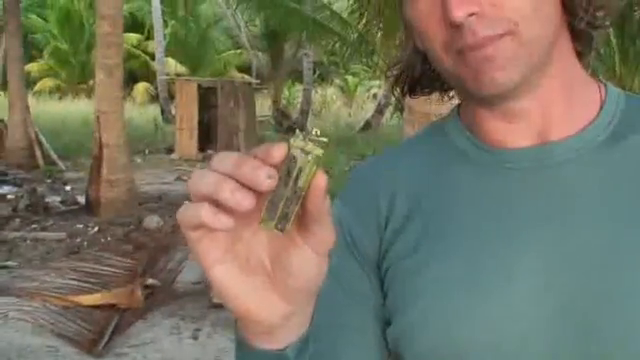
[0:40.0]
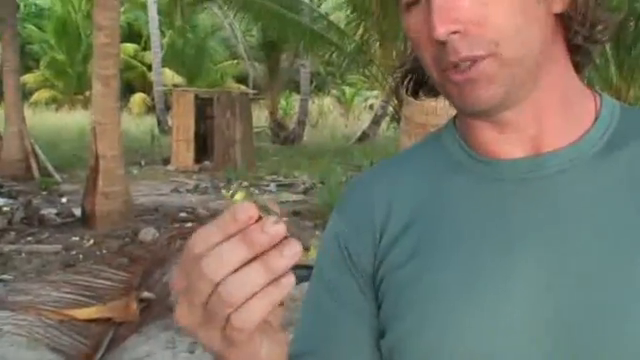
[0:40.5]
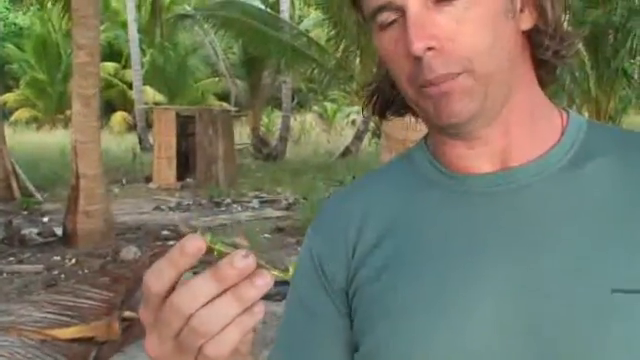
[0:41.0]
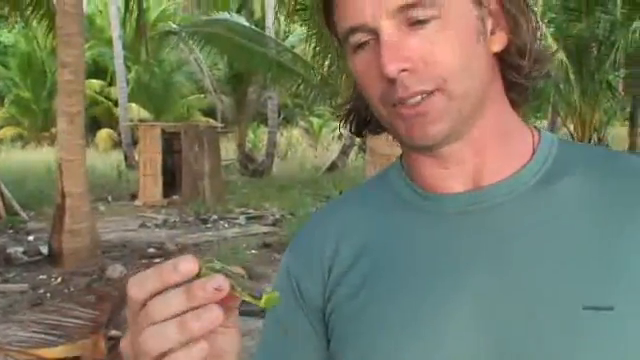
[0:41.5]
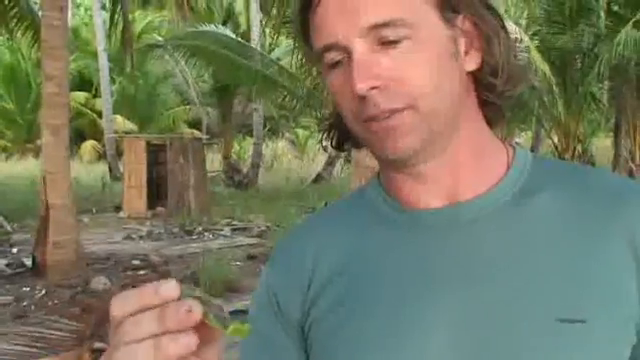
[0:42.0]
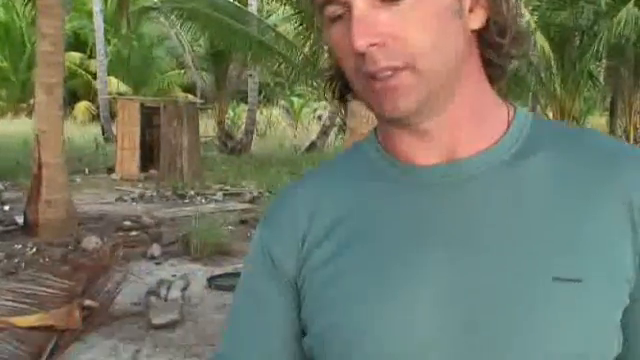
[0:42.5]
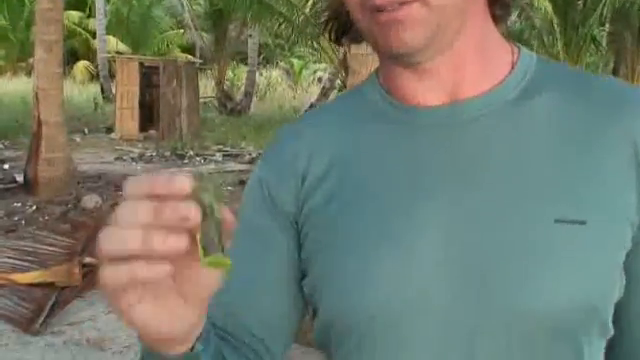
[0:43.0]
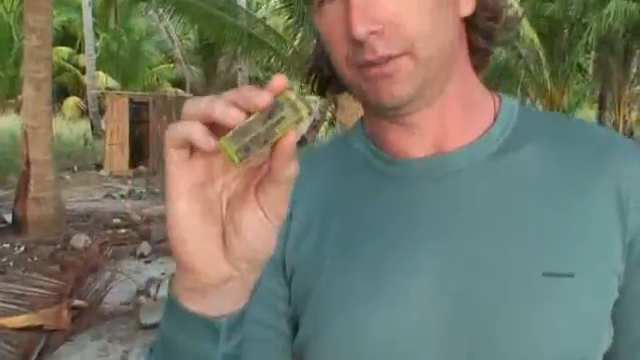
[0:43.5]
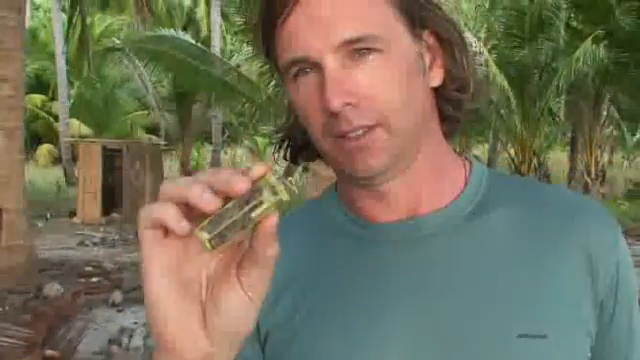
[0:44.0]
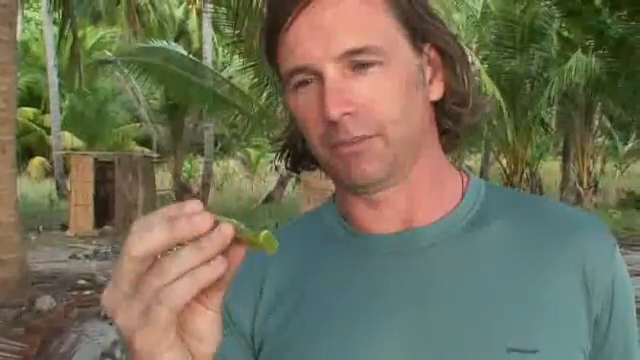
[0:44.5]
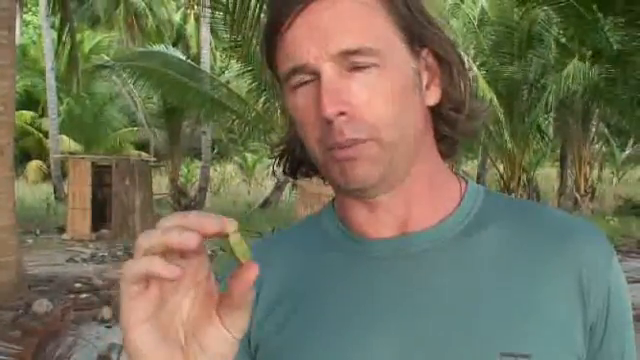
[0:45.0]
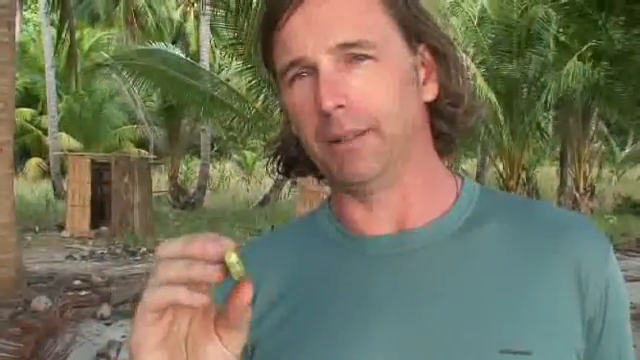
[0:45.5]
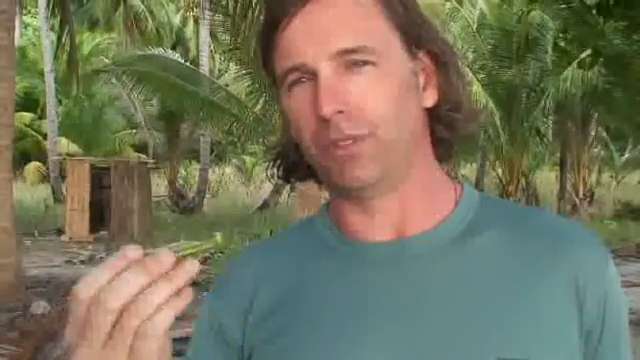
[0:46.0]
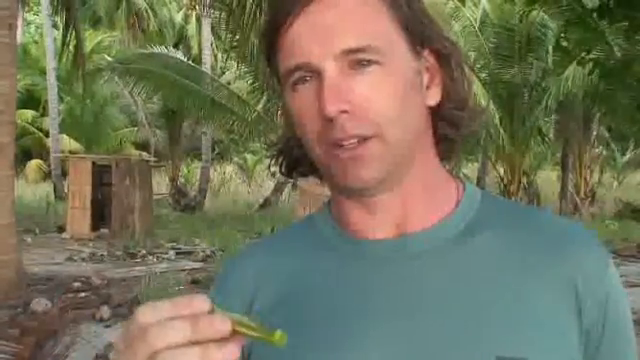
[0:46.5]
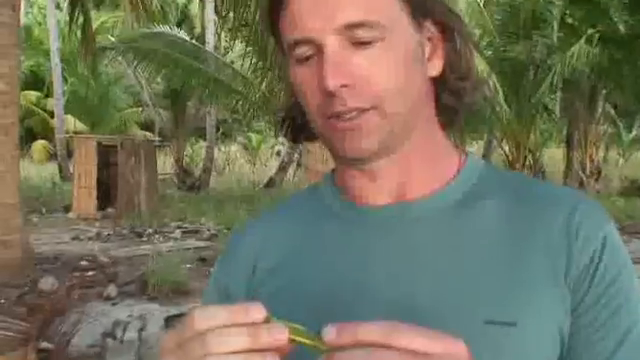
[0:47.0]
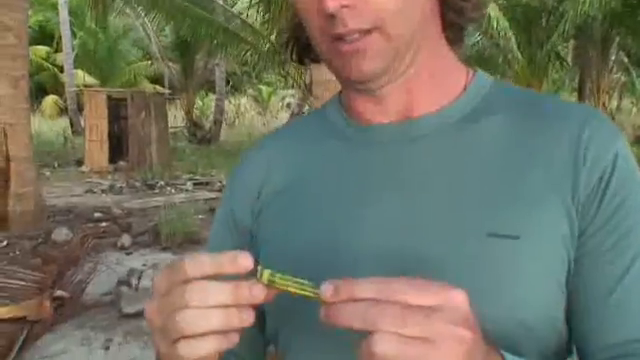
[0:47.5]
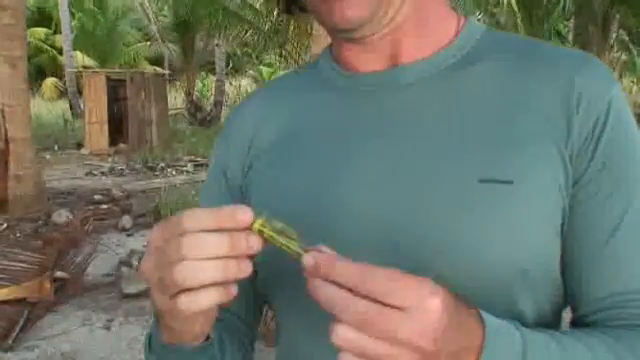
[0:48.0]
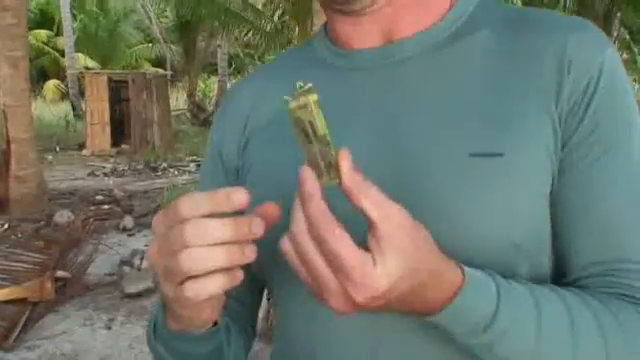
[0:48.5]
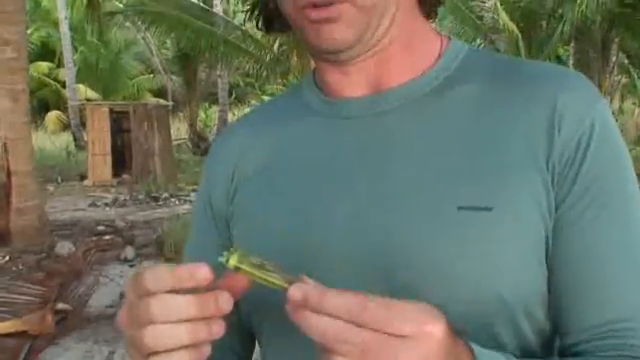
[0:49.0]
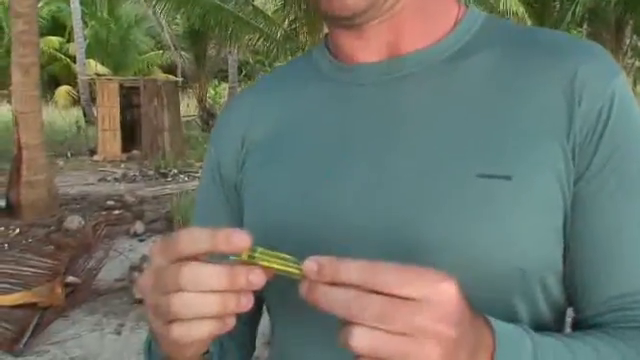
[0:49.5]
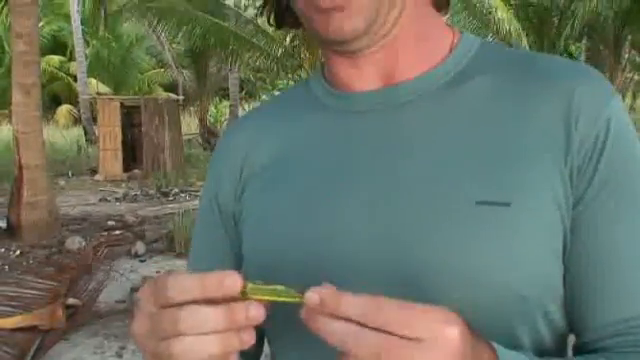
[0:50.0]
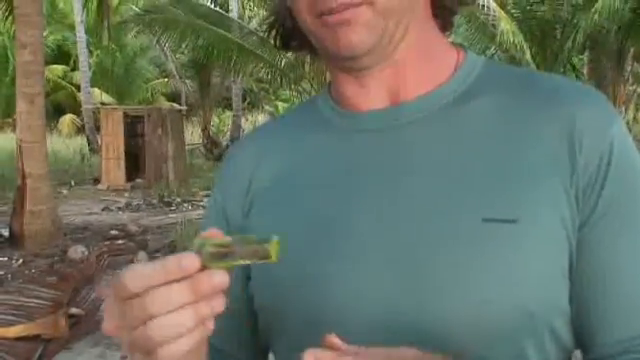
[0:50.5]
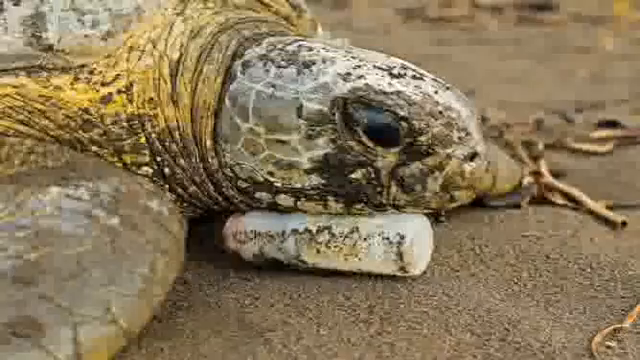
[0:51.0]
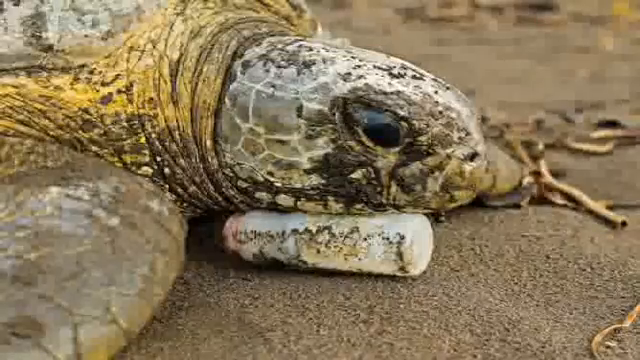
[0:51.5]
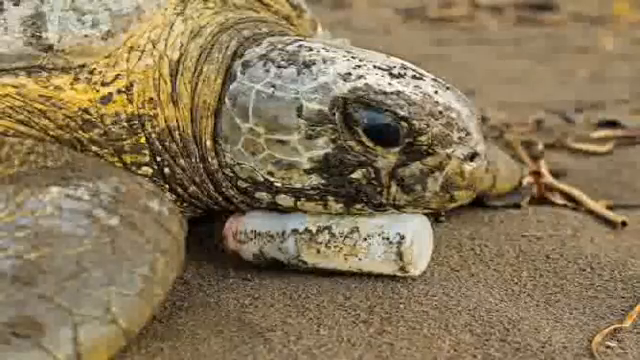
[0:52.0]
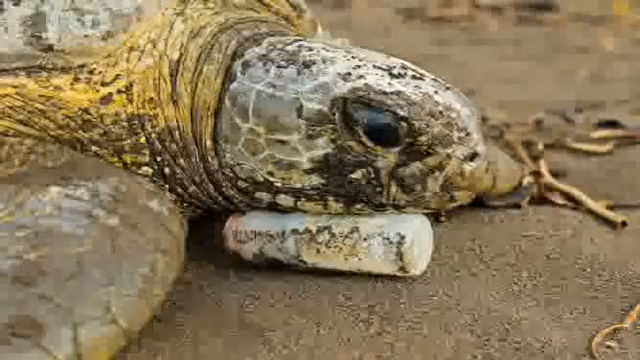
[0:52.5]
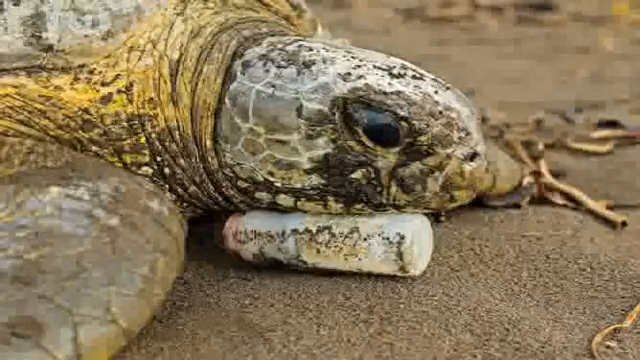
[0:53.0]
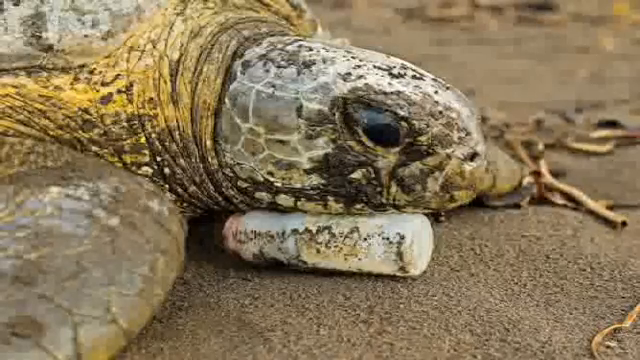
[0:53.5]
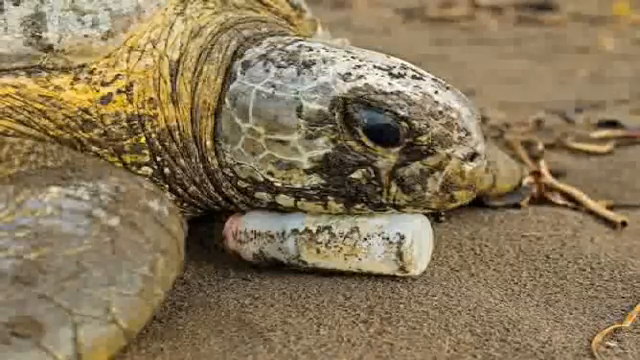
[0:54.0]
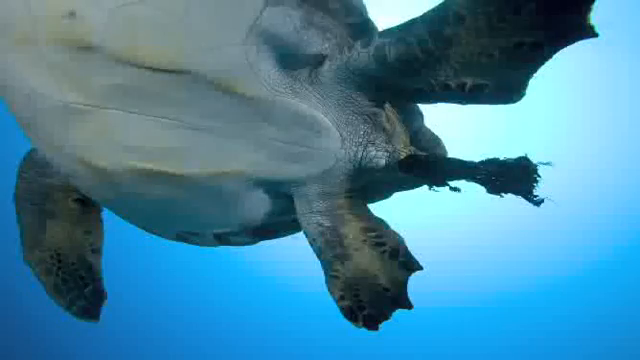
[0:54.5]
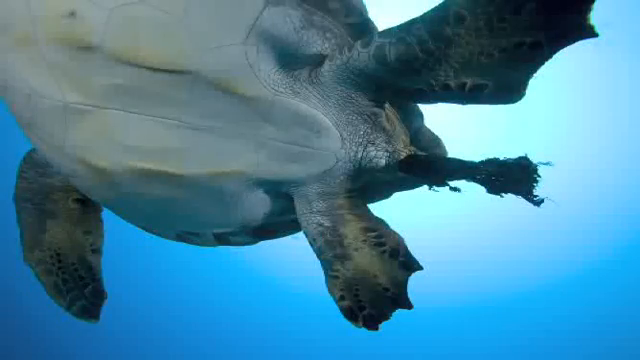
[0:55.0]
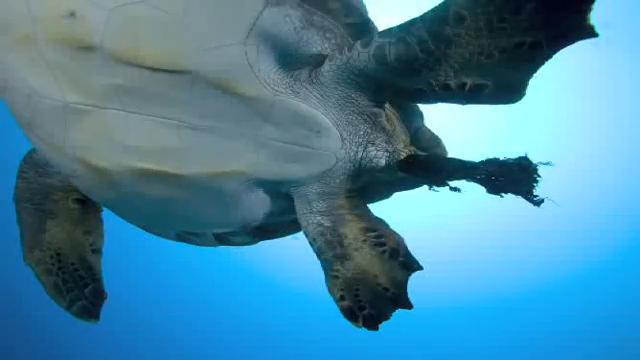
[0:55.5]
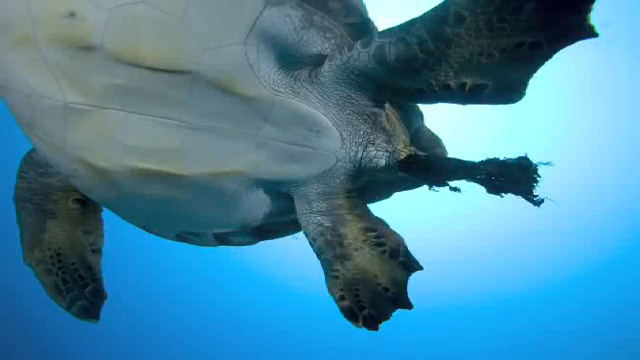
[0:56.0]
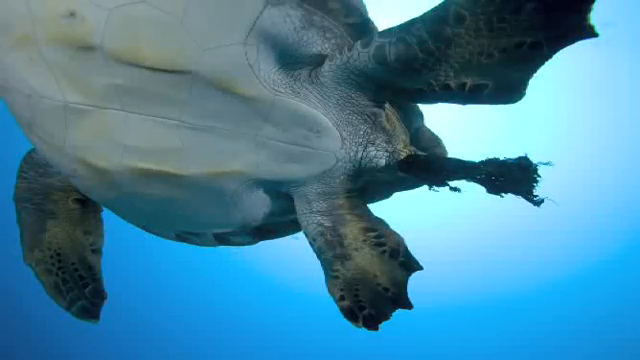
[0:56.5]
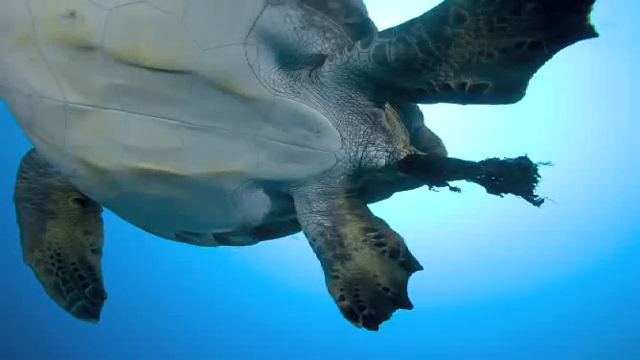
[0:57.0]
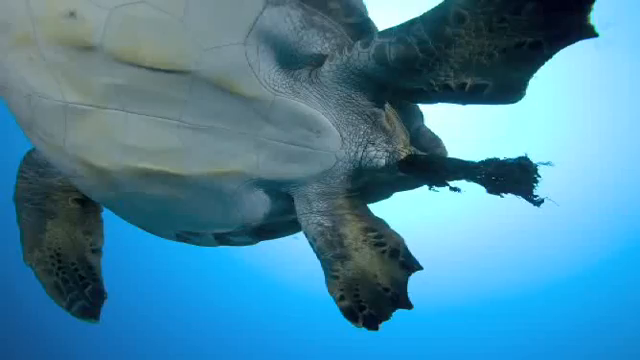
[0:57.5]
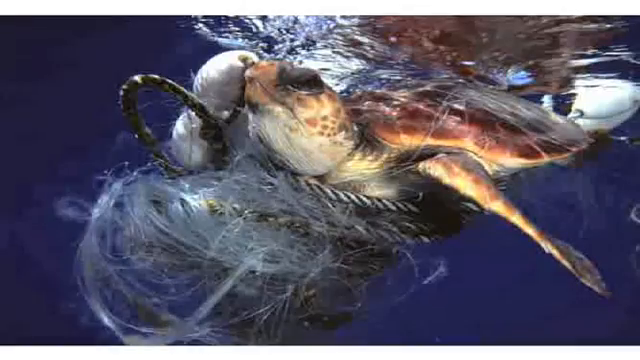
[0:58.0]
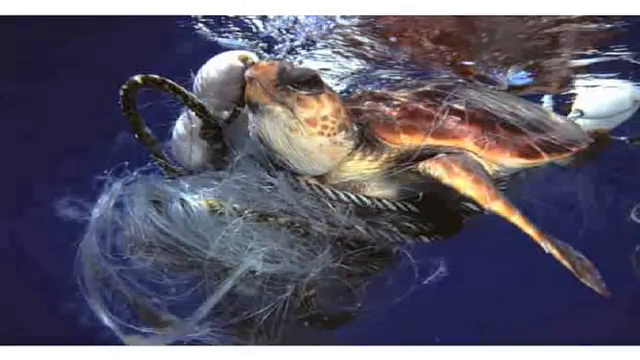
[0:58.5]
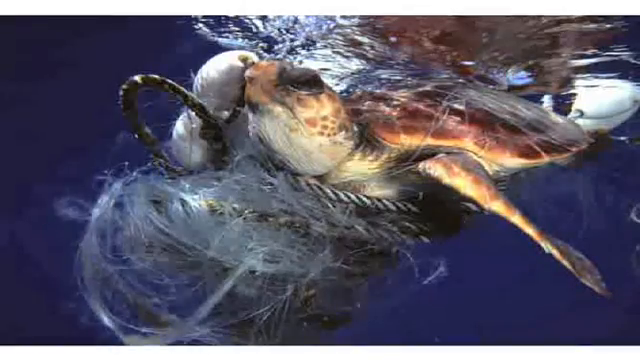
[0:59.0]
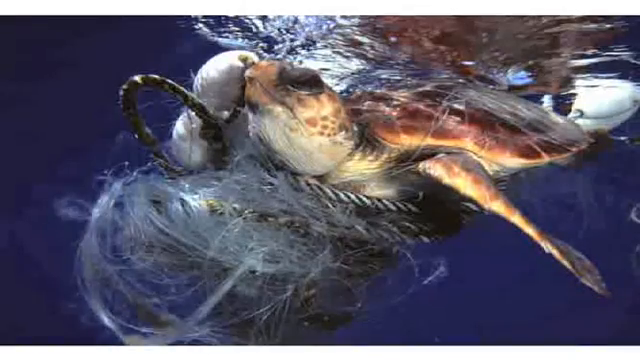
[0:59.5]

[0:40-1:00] The man holds the yellow lighter toward the camera, in the hand on the left side of the screen. In the background is a small makeshift wooden building that looks like an outside toilet because it is so small. It is underneath the trees and surrounded by a lot of garbage, and the area with the garbage has no grass. The camera first shows the hand holding the lighter, and as the man holds the lighter toward his face, the camera follows and shows his face as he speaks. The video then shows a turtle on the ground with its head on top of garbage and trash around it. Next, a turtle swims in water with what seems to be garbage attached to it, followed by a second swimming turtle with a lot of garbage on its body.